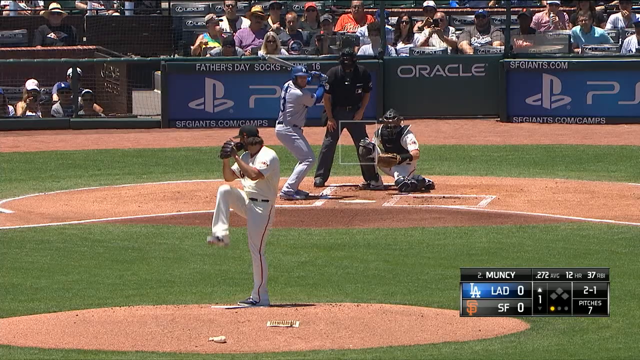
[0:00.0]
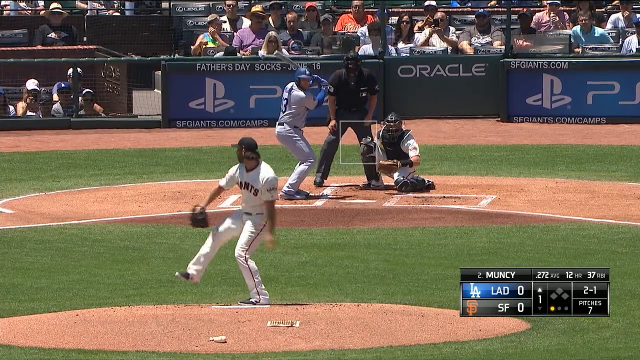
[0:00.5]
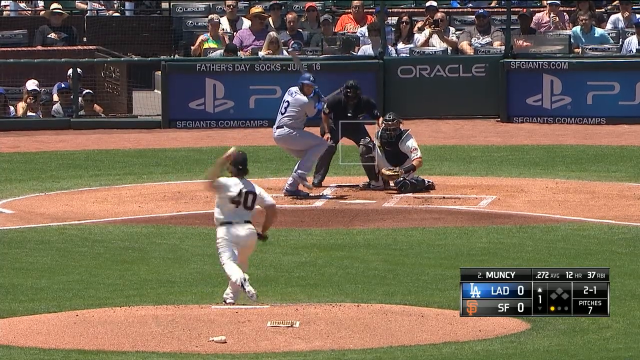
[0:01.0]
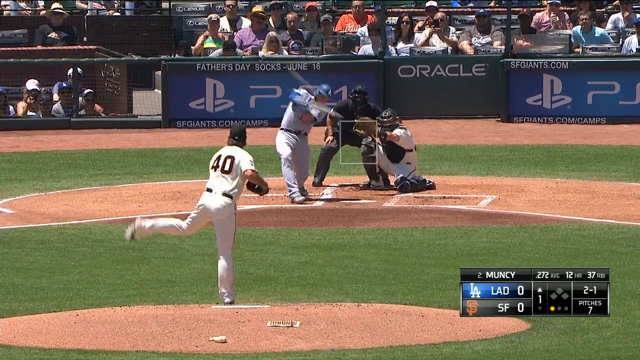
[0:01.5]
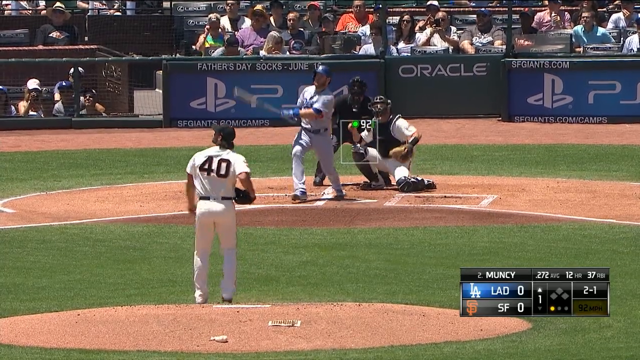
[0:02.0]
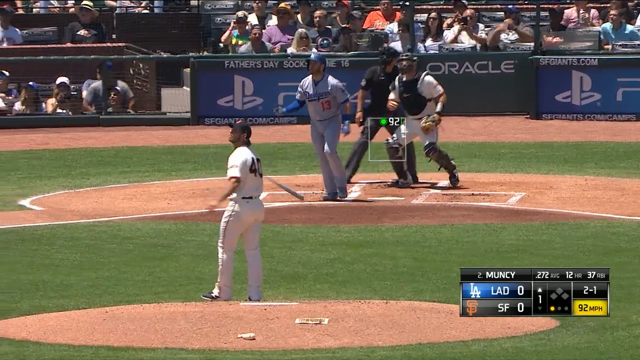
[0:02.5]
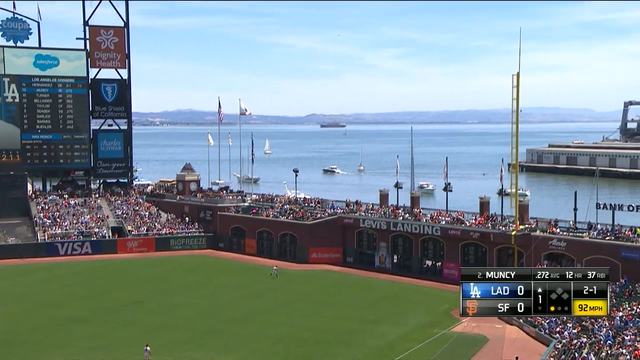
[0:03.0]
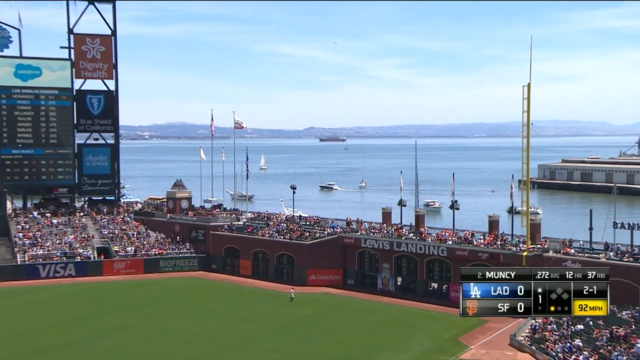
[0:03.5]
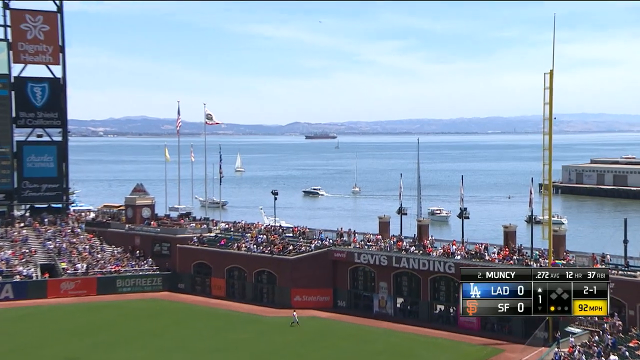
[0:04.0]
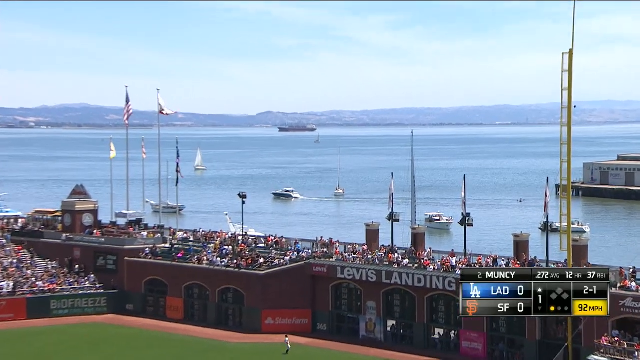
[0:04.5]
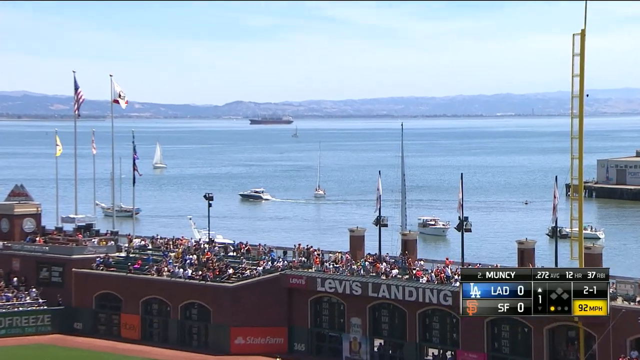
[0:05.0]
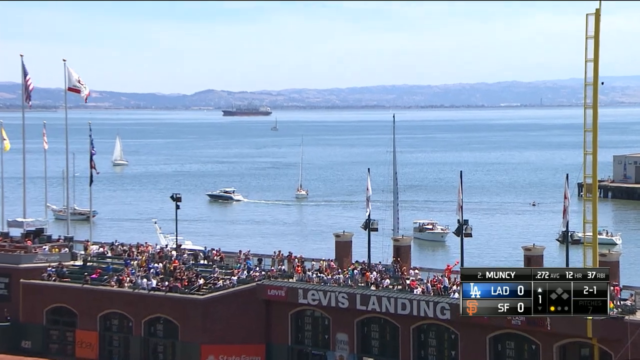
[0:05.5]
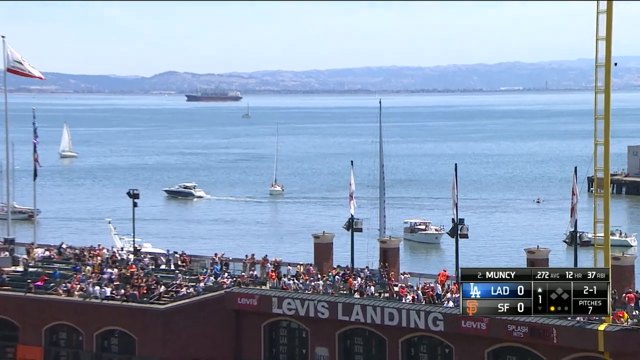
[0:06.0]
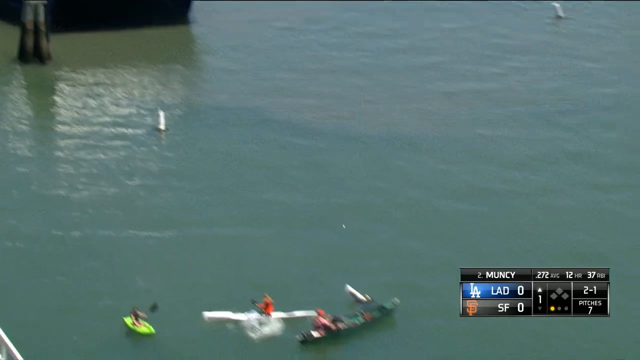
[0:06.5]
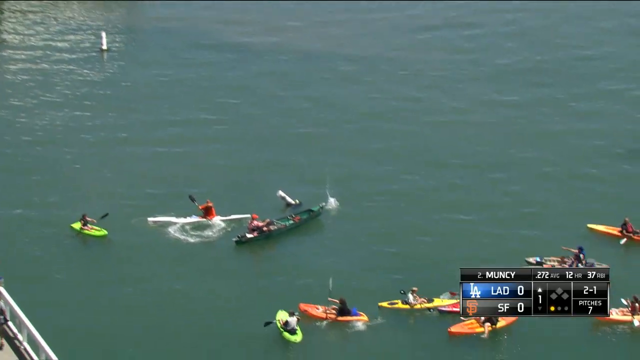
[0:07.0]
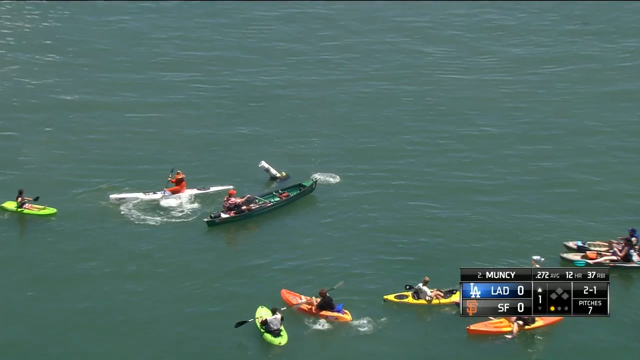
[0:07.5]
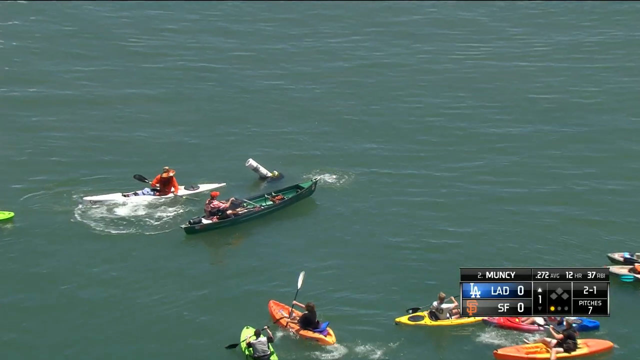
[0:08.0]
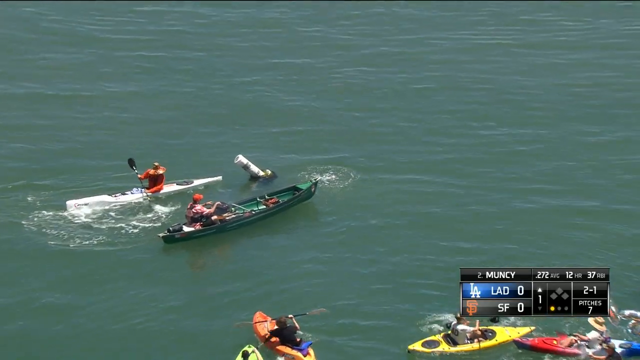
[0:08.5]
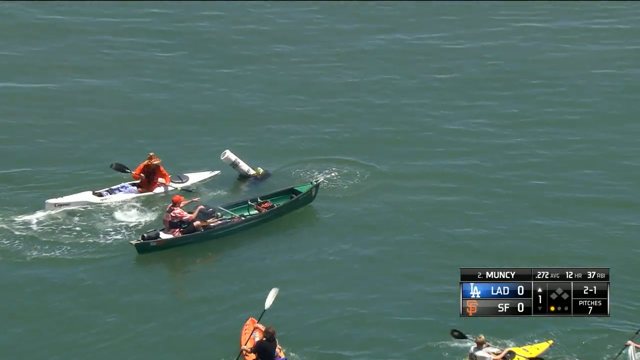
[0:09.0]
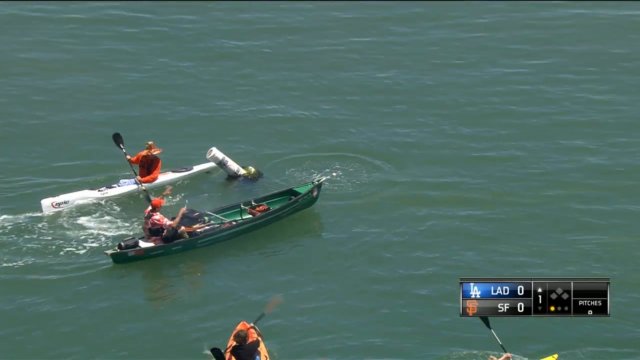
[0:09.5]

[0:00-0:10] Baseball teams play in a big outdoor stadium with no top, and right outside the stadium is water where kayakers are out. The hitter hits the ball over the wall and into the water, and the kayakers grab the ball. "Levi's Landing" appears to be written on the stadium, maybe its name. There are two teams, one in white and one in a blue-gray color, apparently LAD and SF: LA and San Francisco. The water is sort of green. Many kayakers are out there, all paddling around and looking in the water to catch fly balls. The crowd is large, and it is kind of a hazy blue day, with a blue sky and a lot of puffy clouds.